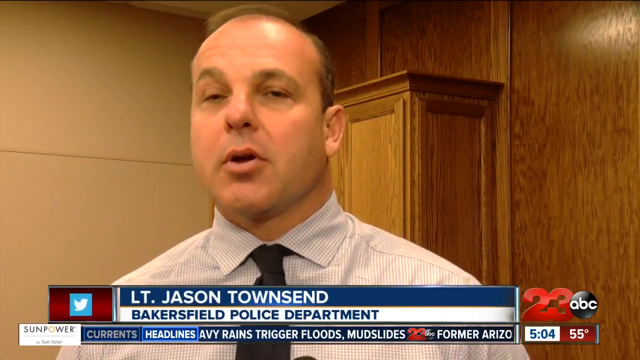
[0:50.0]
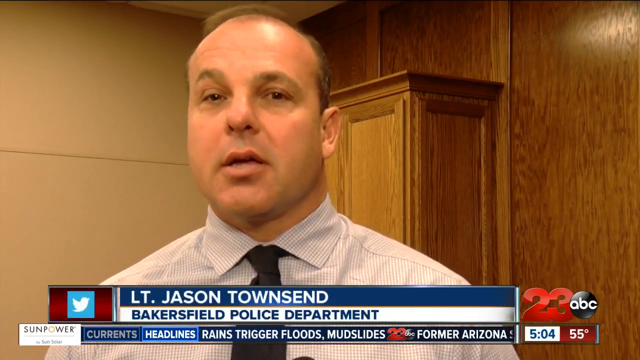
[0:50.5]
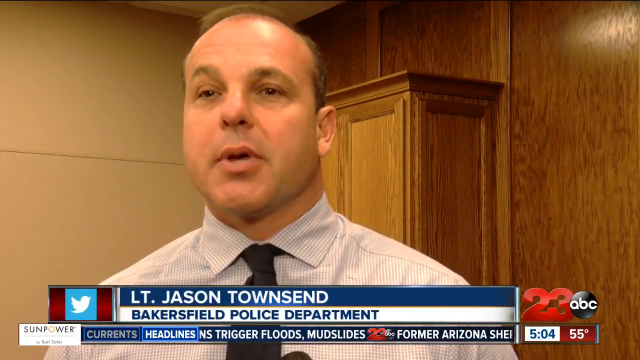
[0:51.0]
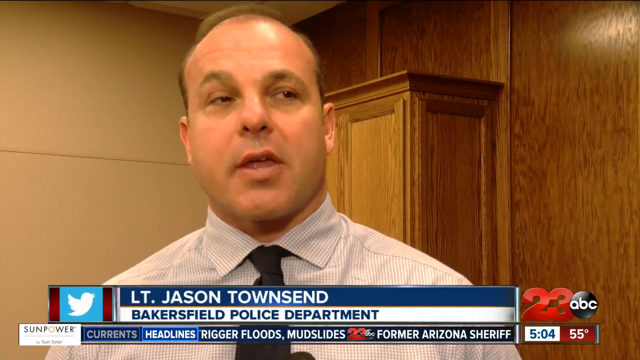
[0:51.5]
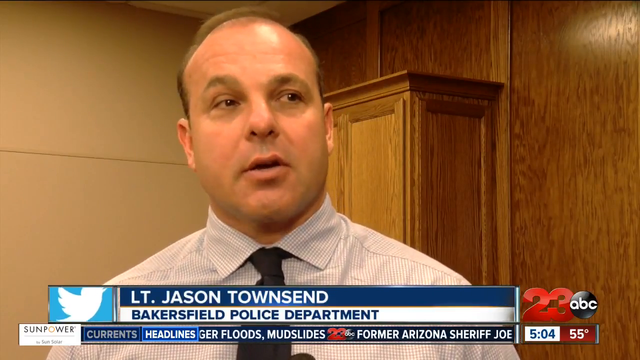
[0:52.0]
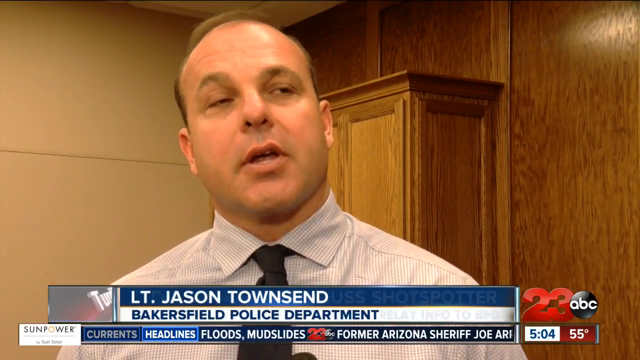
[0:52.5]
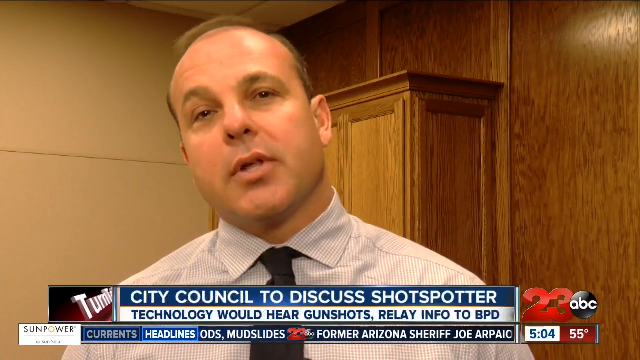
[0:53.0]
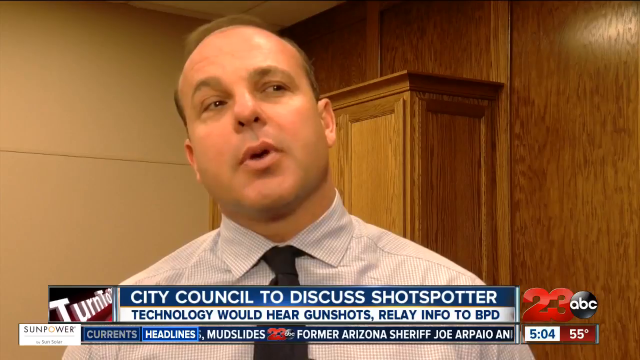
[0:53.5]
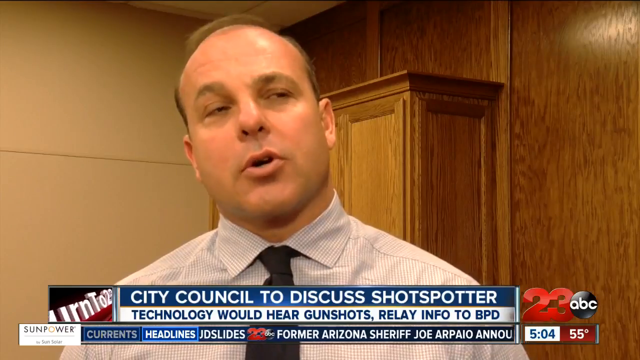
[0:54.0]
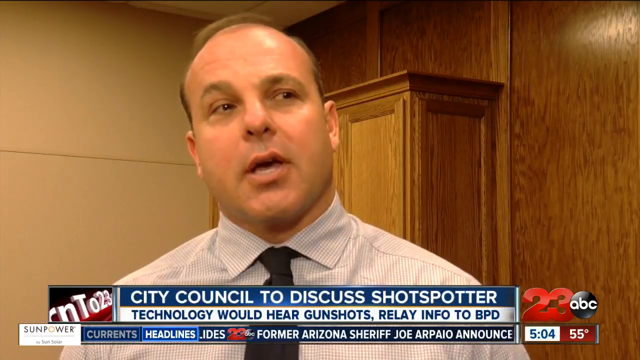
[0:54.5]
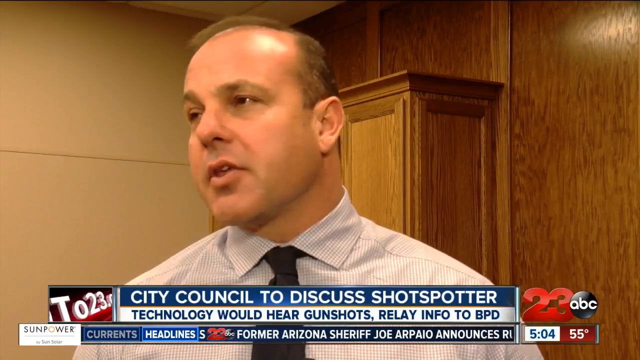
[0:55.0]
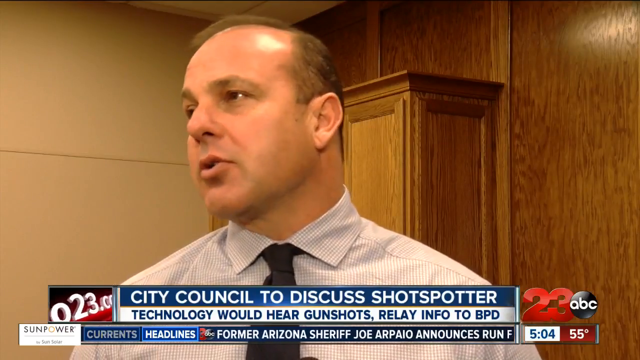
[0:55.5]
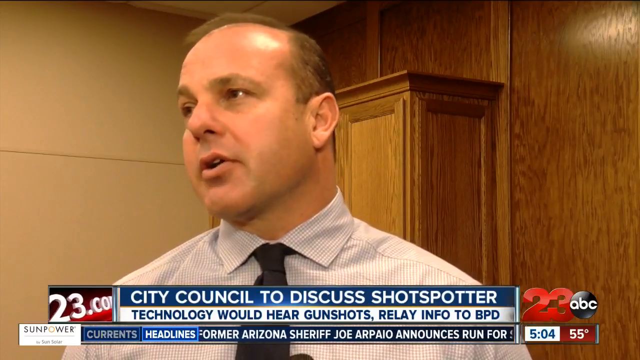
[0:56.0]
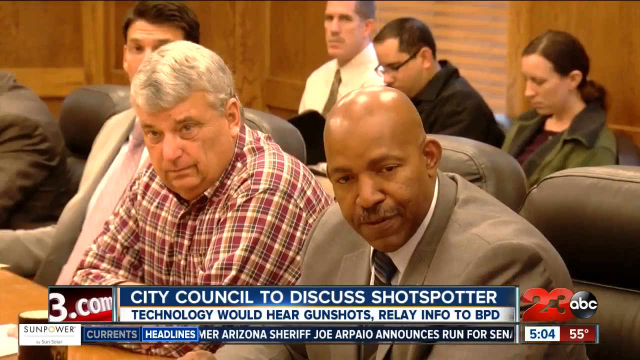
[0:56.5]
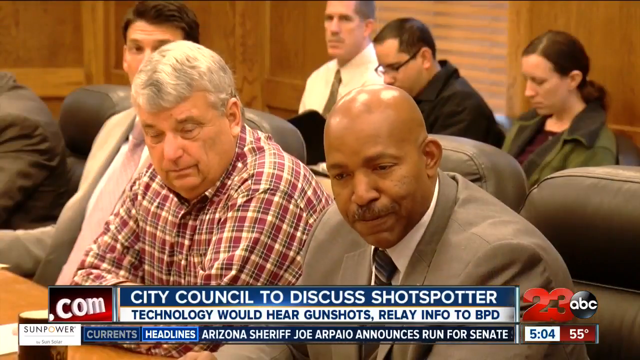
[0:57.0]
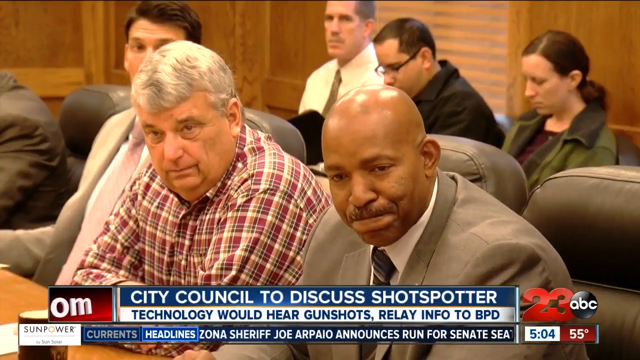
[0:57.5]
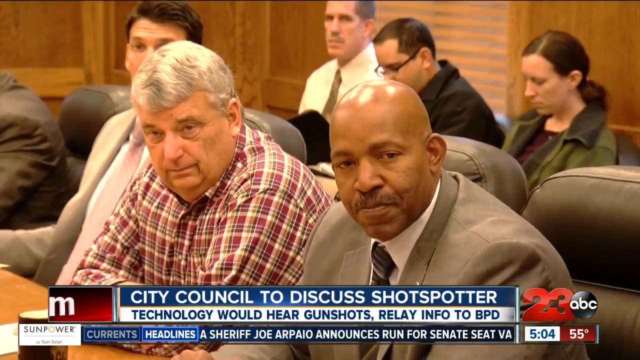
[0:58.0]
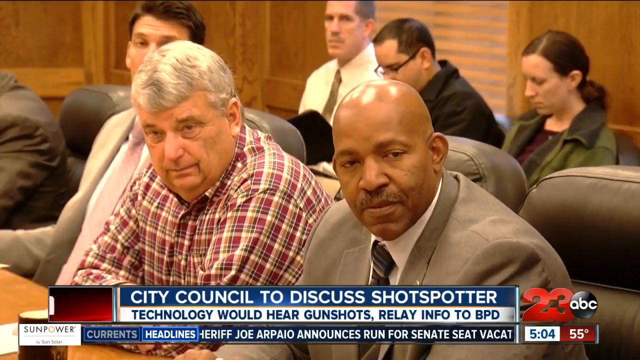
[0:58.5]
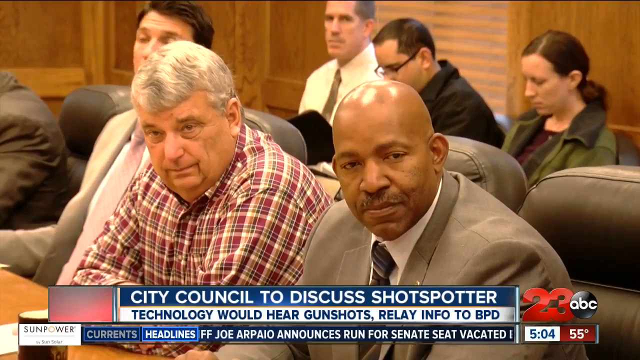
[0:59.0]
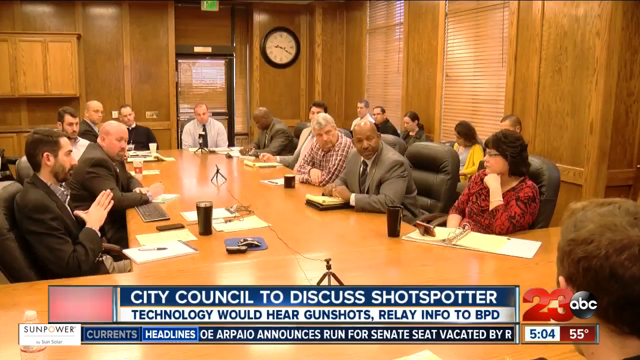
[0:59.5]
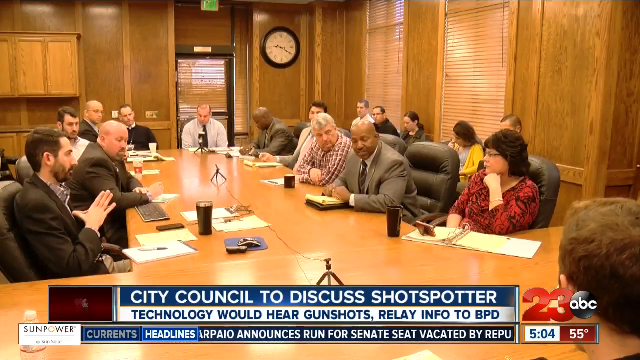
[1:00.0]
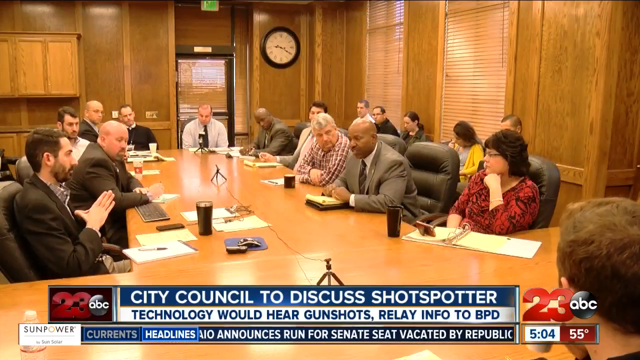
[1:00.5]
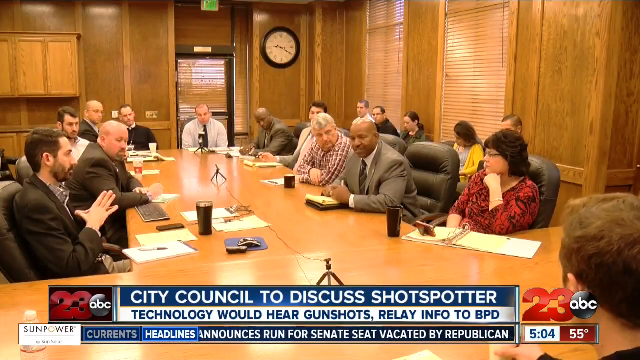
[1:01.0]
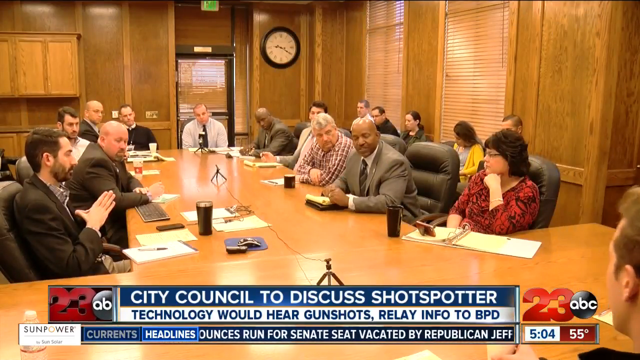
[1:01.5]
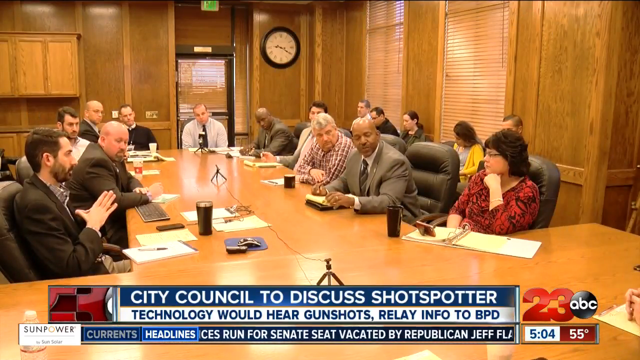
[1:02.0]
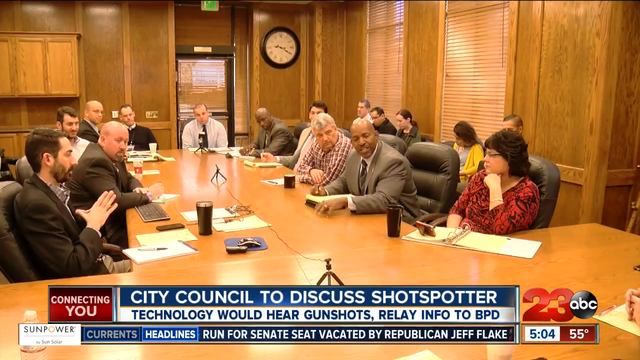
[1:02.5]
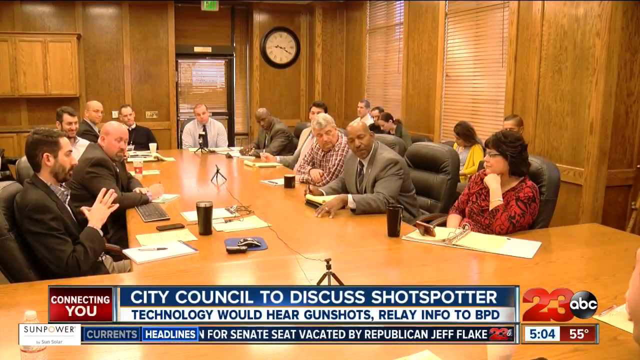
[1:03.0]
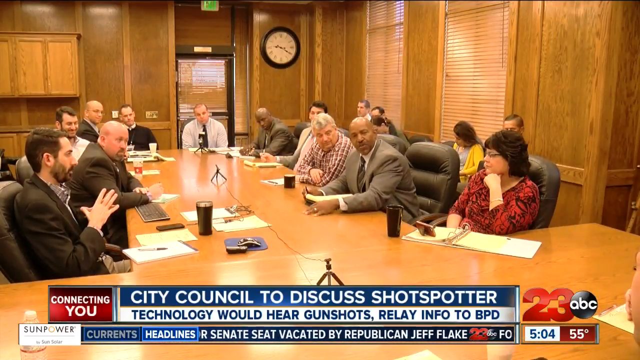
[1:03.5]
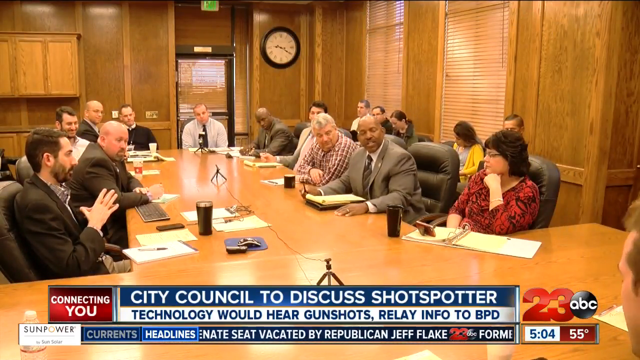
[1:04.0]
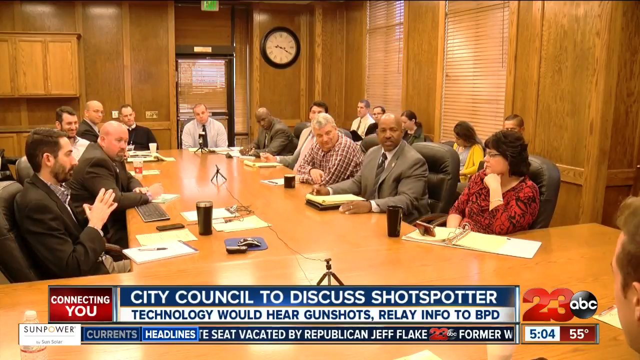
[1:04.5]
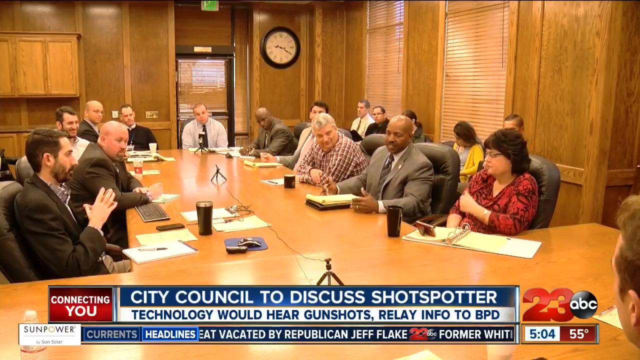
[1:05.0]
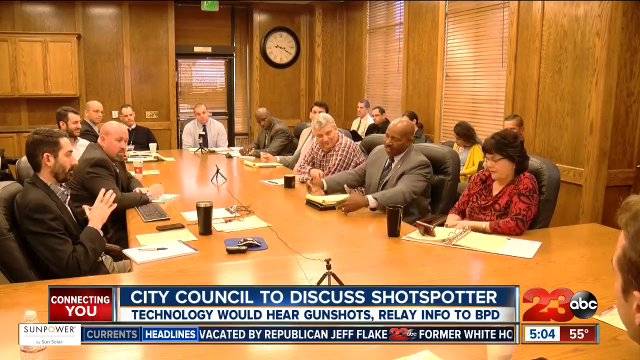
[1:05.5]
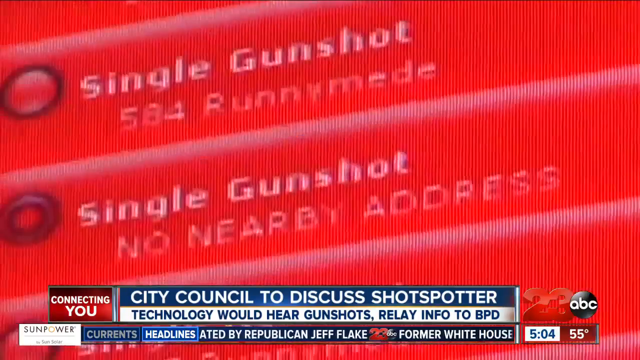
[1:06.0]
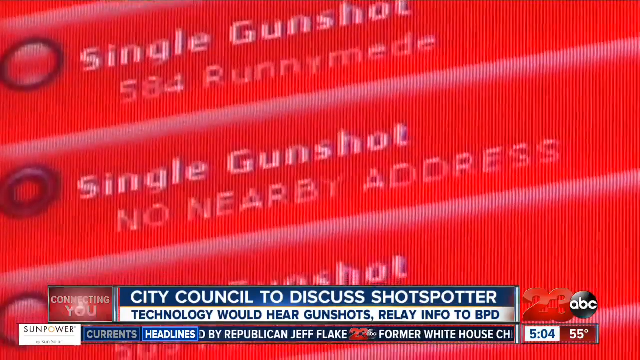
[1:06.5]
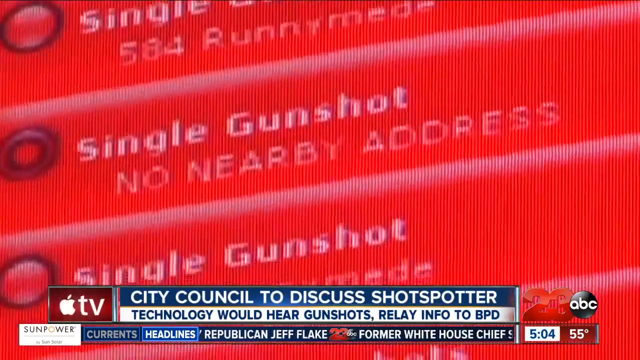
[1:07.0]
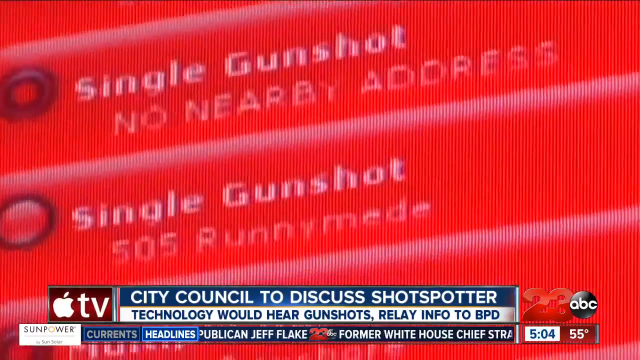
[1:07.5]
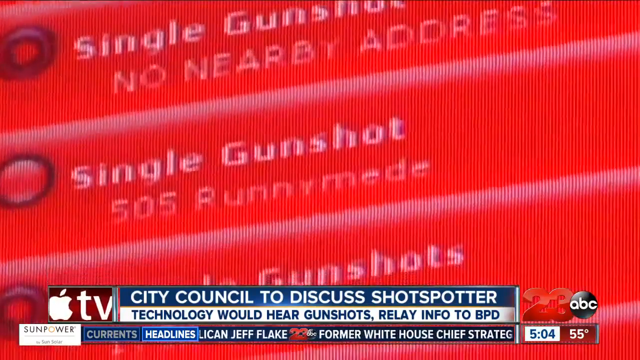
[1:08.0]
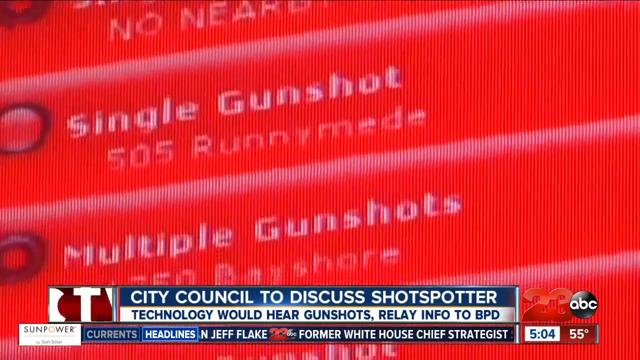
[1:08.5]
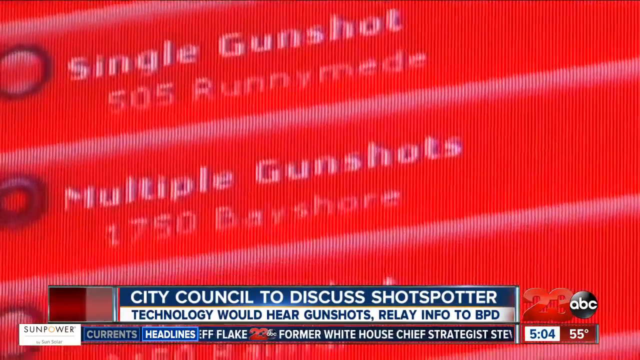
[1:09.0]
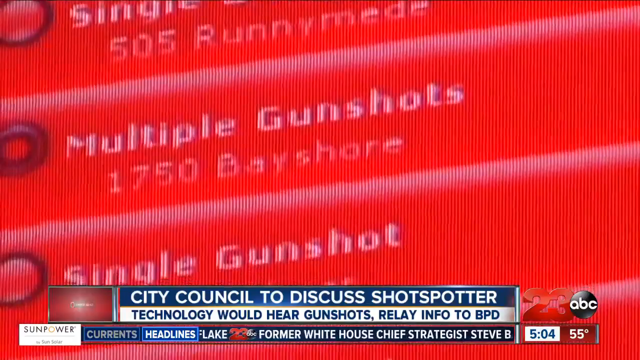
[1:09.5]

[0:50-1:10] Lieutenant Jason Townsend continues talking in an interview style and is seen speaking to a crowd of people in a meeting-like setting. They are all at a long wooden meeting table, with about a little over 10, maybe 15 people in the room with him. Among them are a woman in a red dress and a bald man in a gray vest. Afterwards, more footage of the ShotSpotter app shows the different addresses where gunshots were heard.